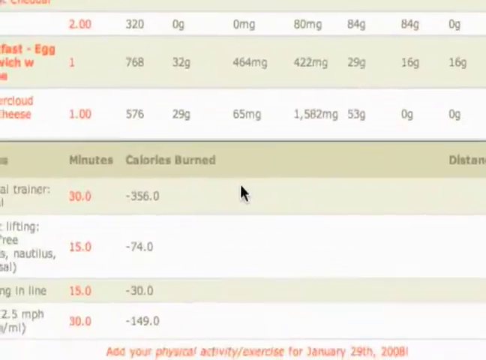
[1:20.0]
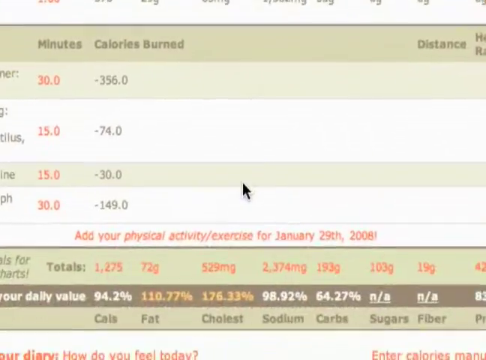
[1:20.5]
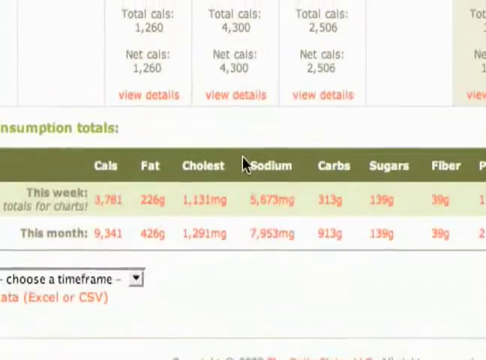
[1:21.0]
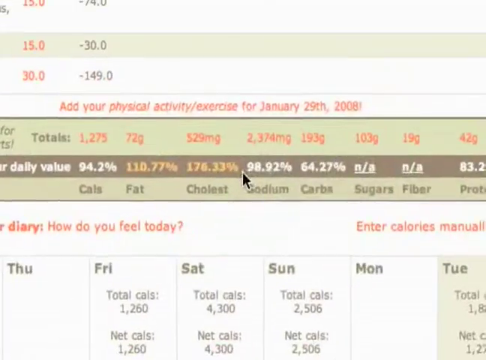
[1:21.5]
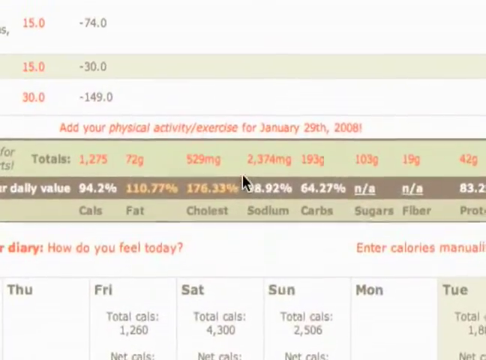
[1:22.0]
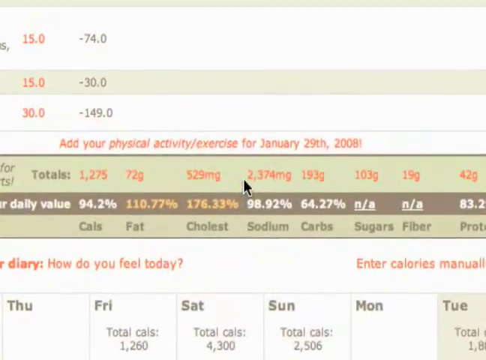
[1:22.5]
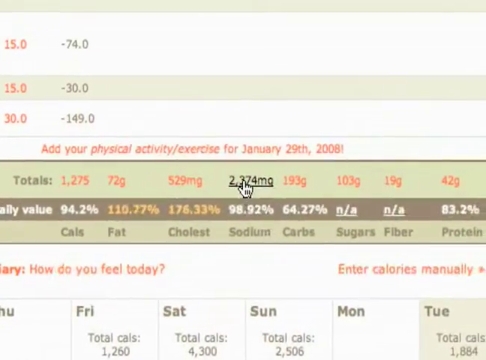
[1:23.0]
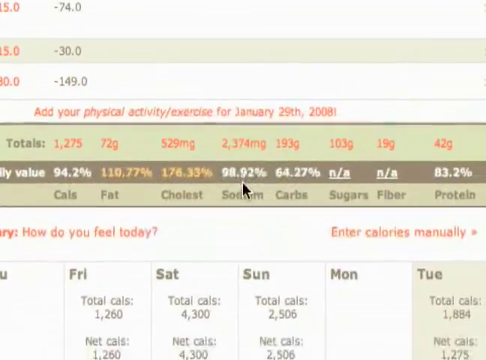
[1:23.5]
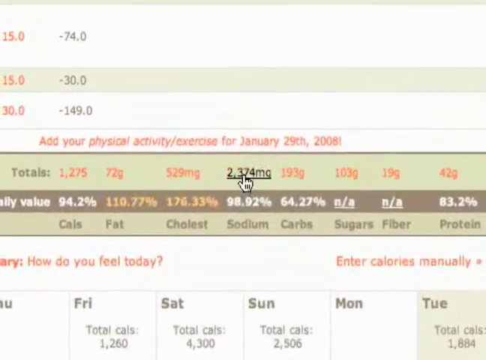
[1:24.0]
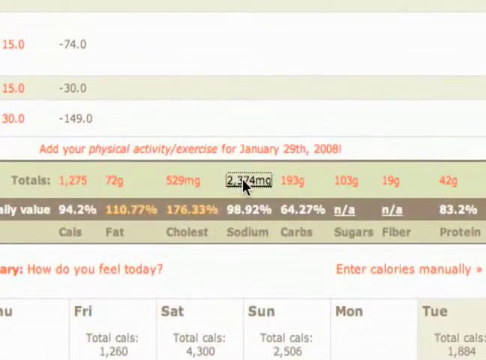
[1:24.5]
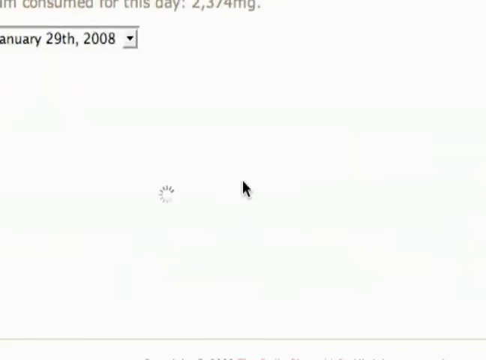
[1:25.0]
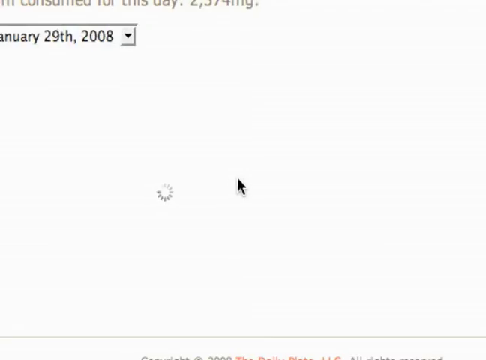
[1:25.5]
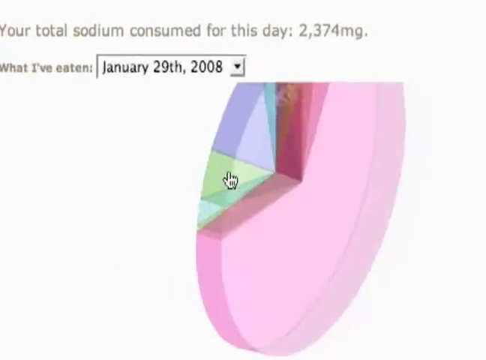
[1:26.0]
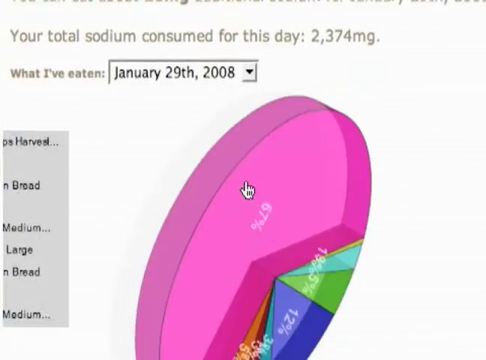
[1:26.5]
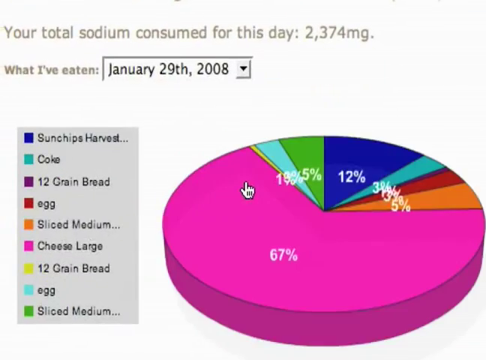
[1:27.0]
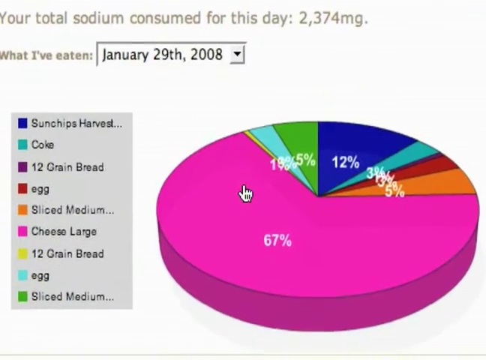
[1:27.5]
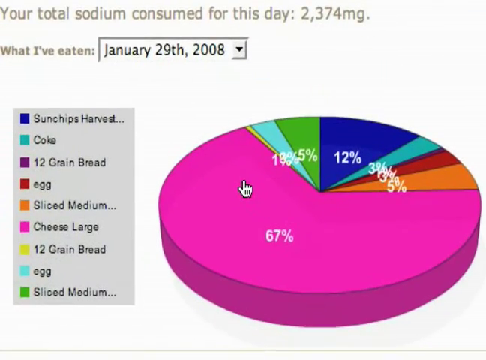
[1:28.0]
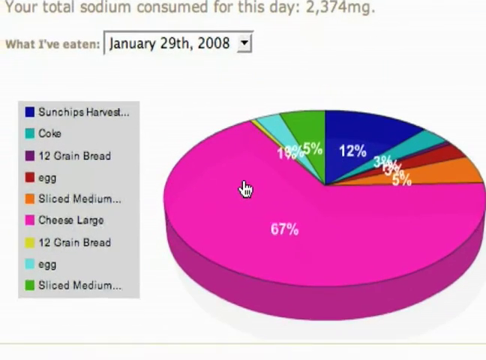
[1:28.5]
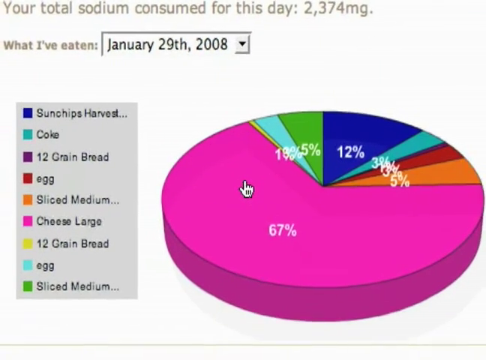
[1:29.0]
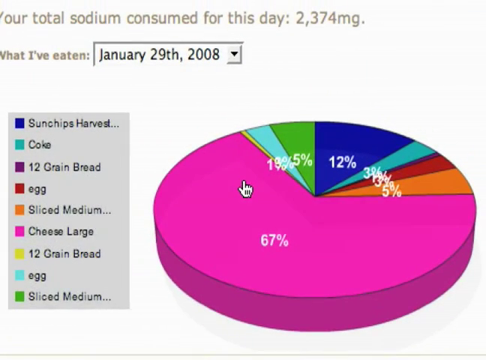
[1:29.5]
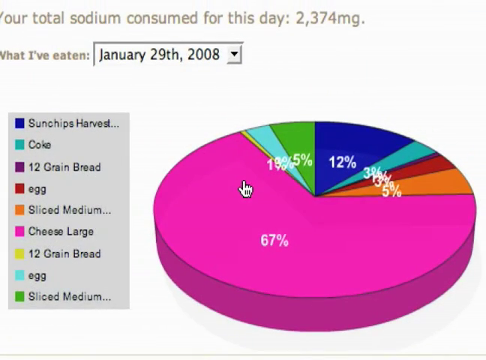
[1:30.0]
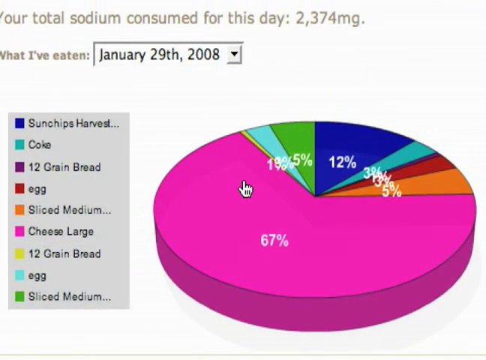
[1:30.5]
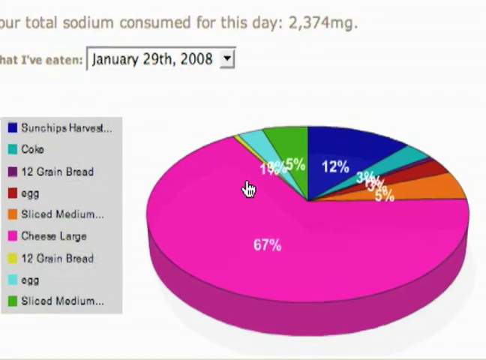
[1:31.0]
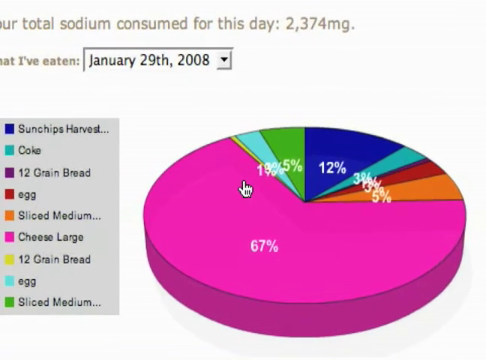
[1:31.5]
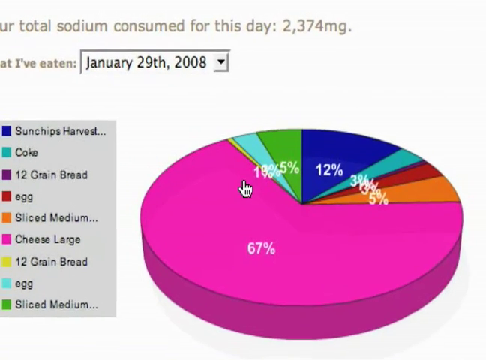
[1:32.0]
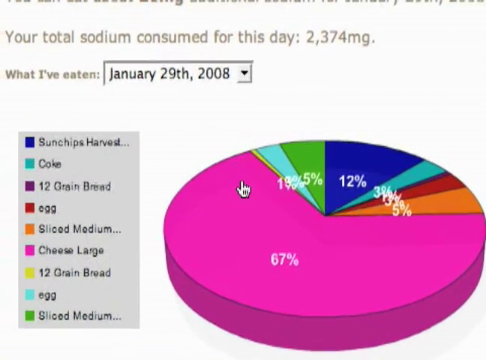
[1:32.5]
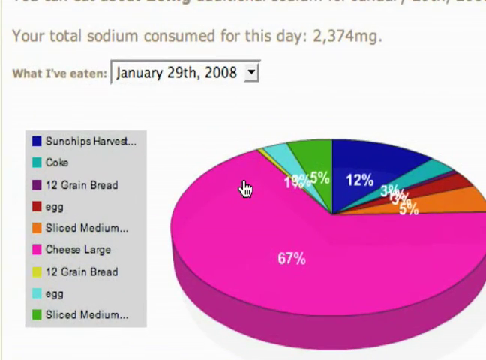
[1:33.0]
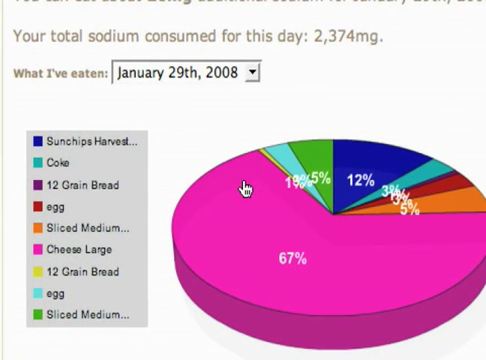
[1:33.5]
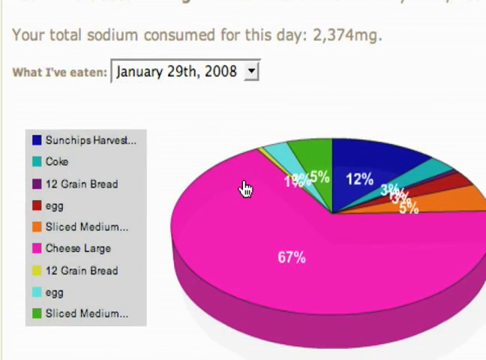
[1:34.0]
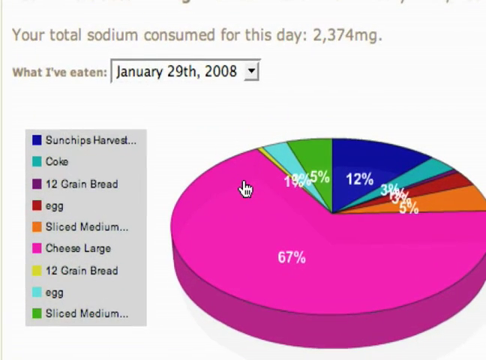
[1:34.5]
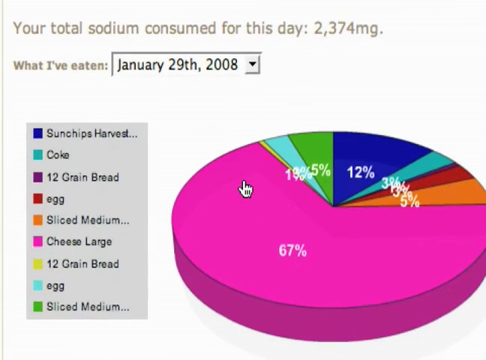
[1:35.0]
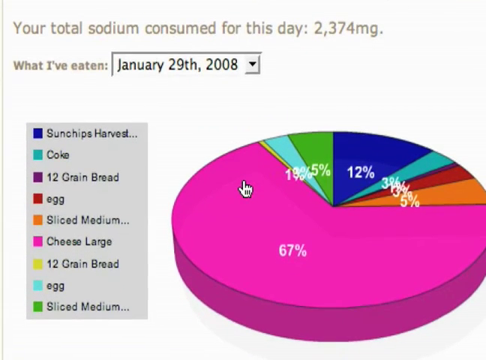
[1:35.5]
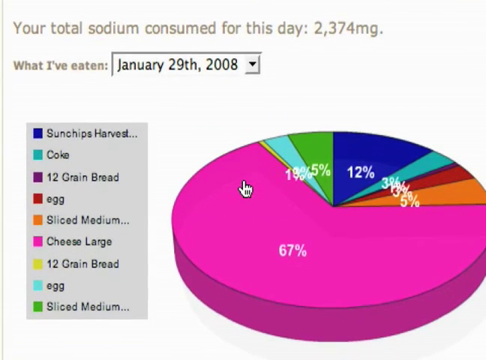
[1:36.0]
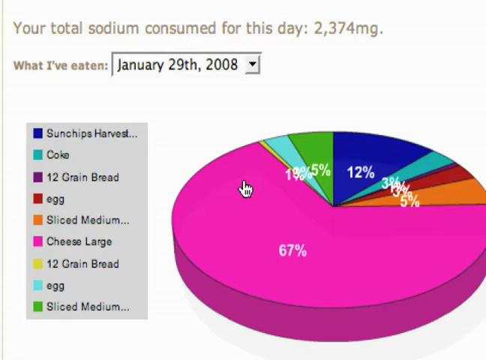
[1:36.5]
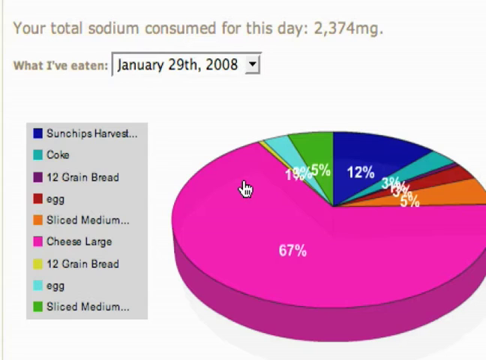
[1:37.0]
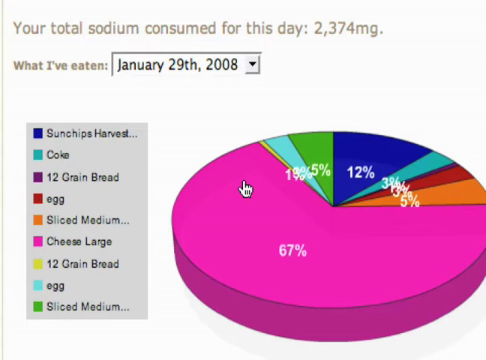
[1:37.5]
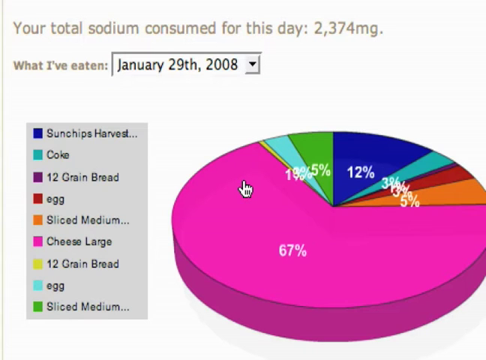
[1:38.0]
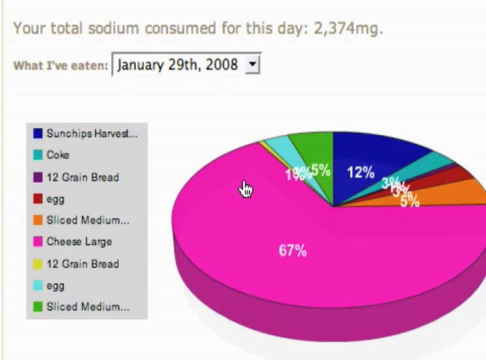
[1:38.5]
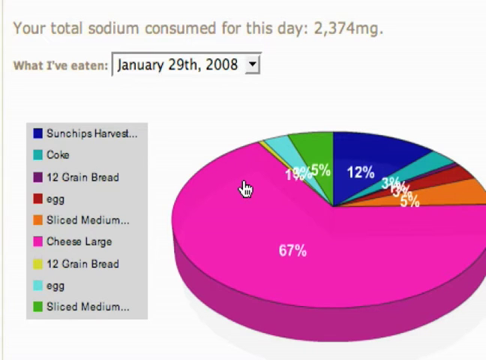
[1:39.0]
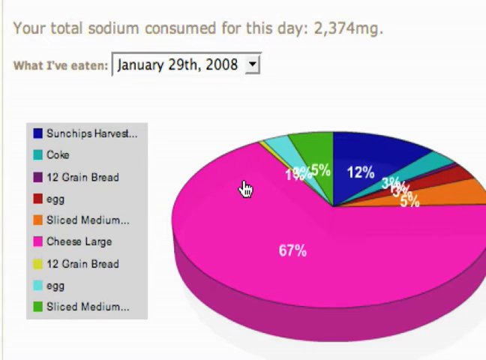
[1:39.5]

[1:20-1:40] The user scrolls through calorie information and settles on an attribute, 2,374 milligrams. On first hovering over it the pointer changes to a glove; the user hovers away, then back over it, and clicks it. A little spinning wheel appears very briefly as an animated pie chart is generated; the chart goes through almost a complete rotation and lands on the screen. Its largest portion is cheese large, at 67%, where the pointer, a little hand or glove, is pointing. The user studies it for a moment, moving slightly to the left, and moves the pointer around that general area without clicking anything.